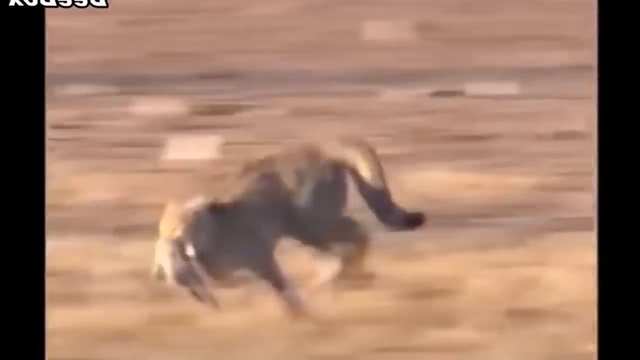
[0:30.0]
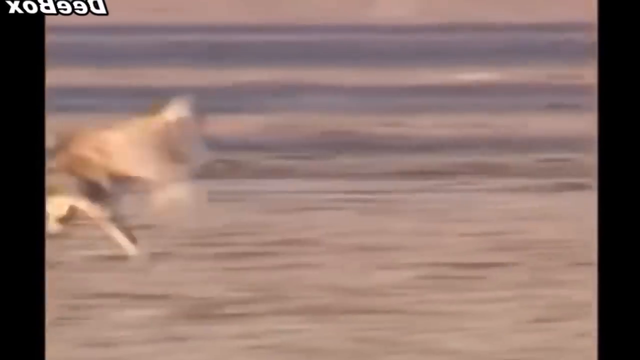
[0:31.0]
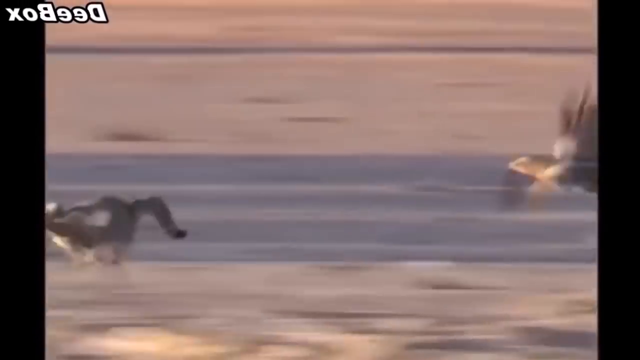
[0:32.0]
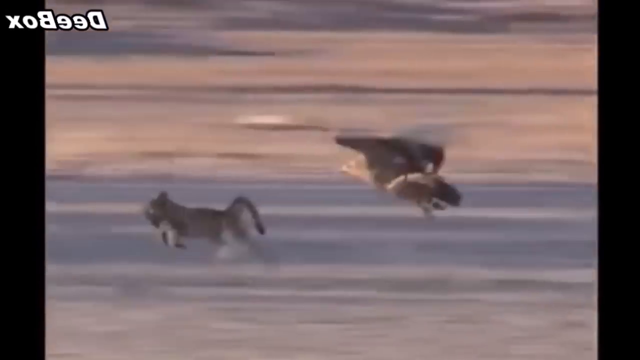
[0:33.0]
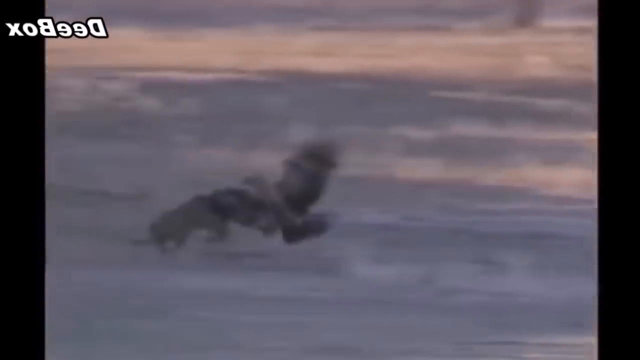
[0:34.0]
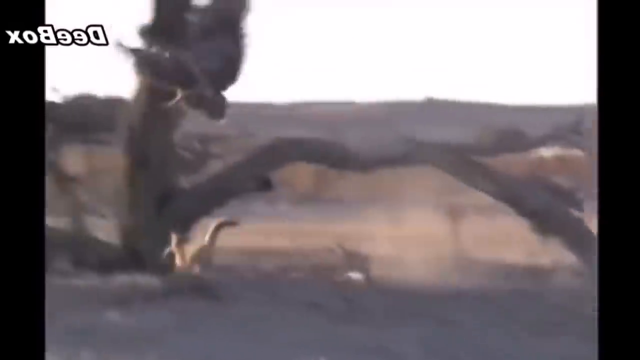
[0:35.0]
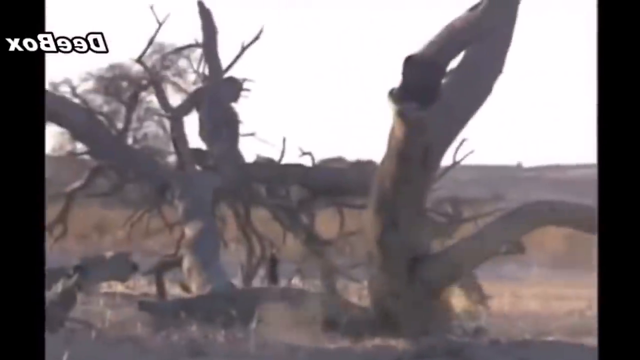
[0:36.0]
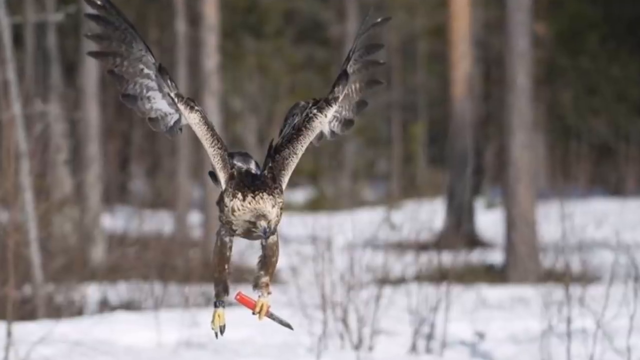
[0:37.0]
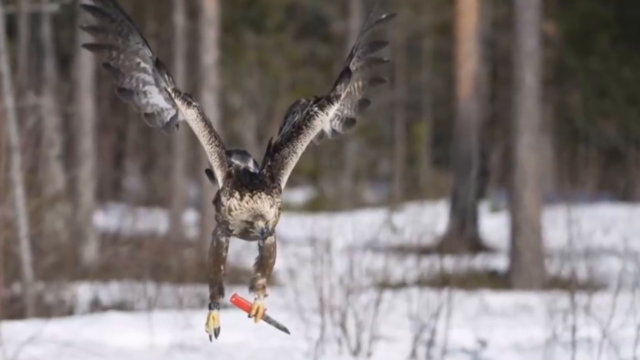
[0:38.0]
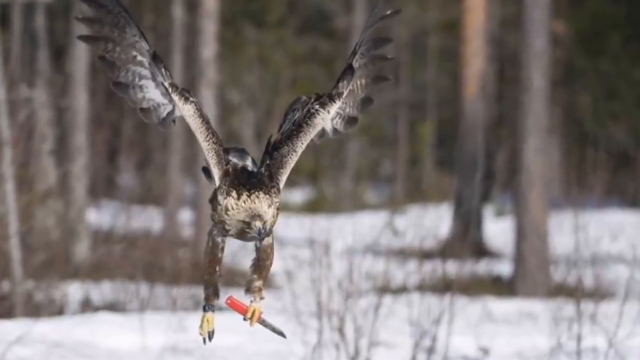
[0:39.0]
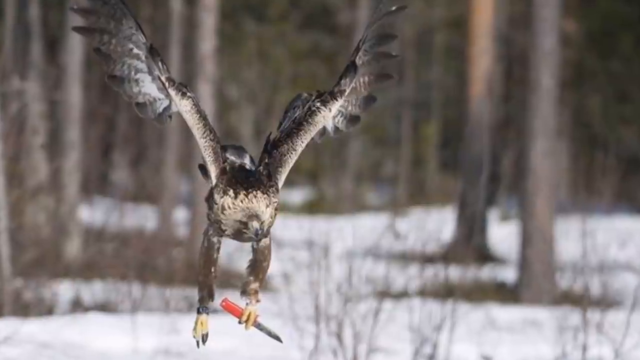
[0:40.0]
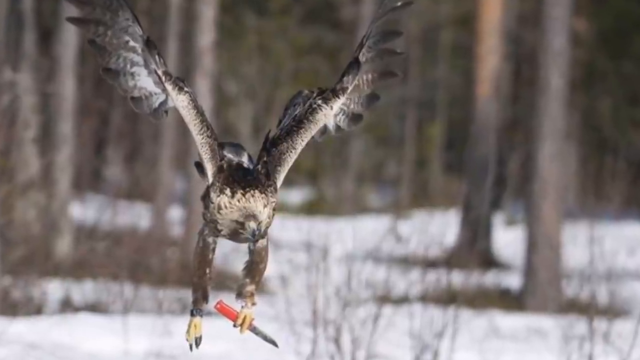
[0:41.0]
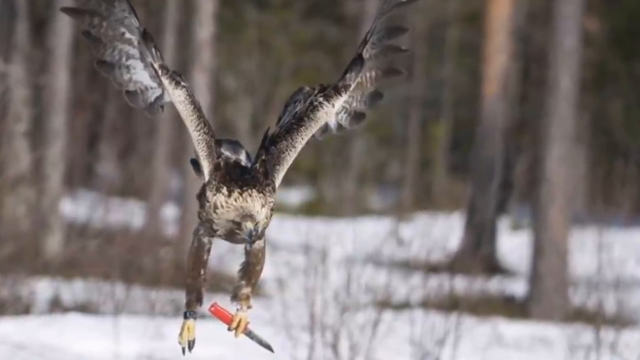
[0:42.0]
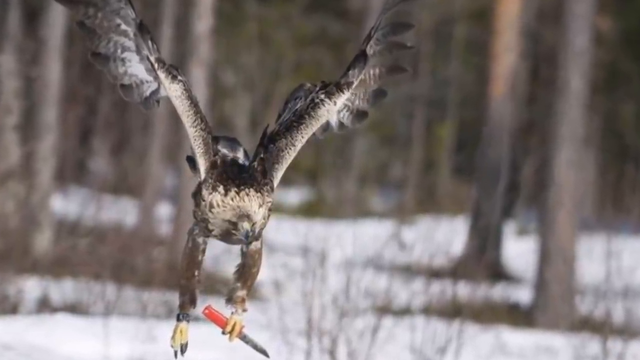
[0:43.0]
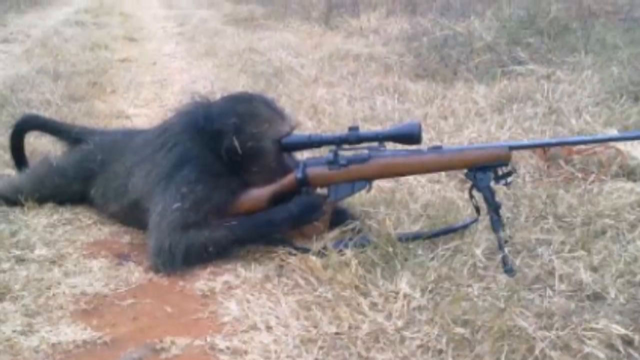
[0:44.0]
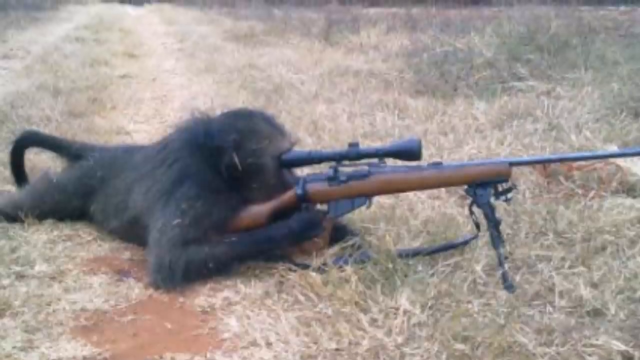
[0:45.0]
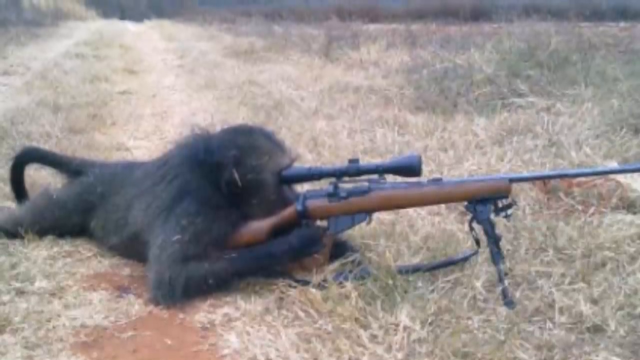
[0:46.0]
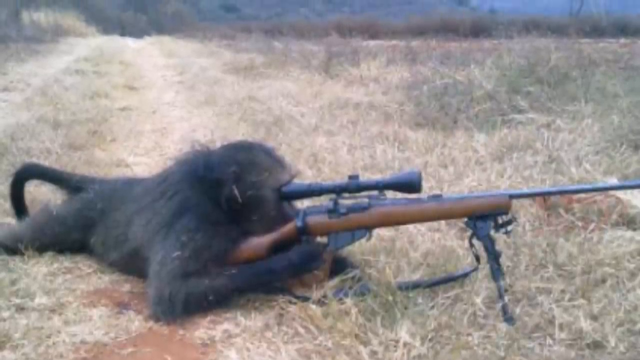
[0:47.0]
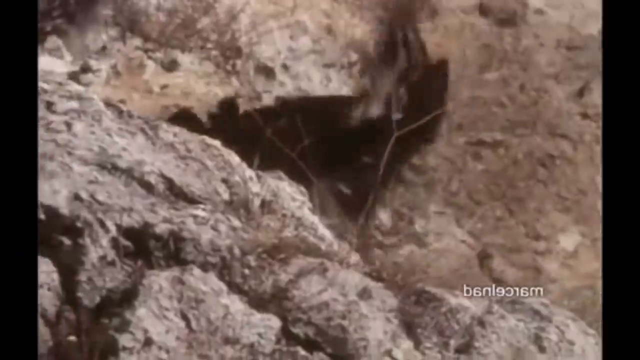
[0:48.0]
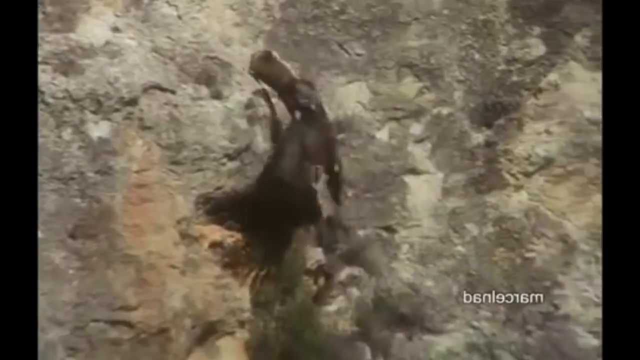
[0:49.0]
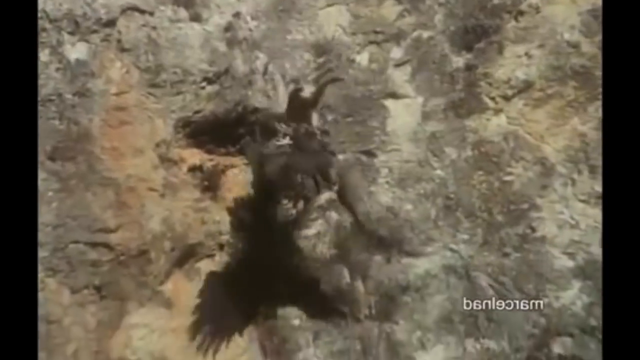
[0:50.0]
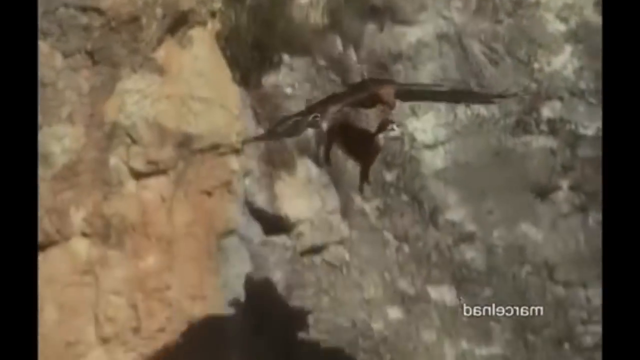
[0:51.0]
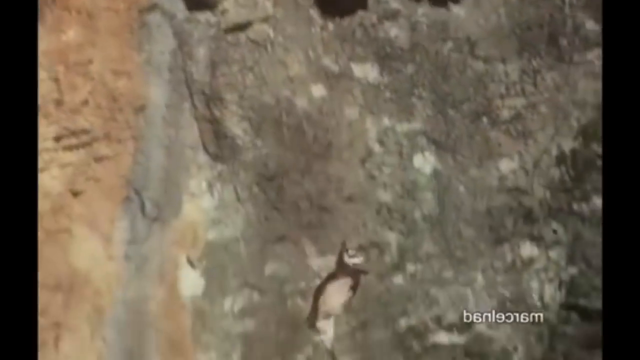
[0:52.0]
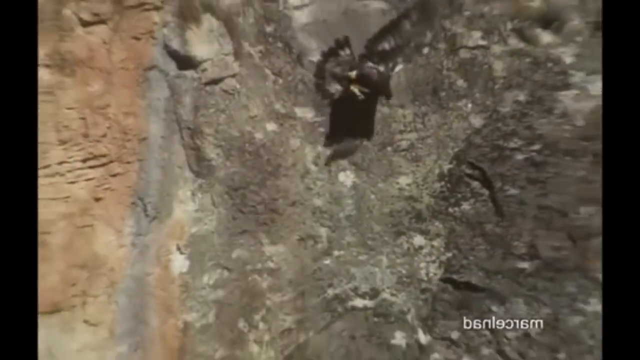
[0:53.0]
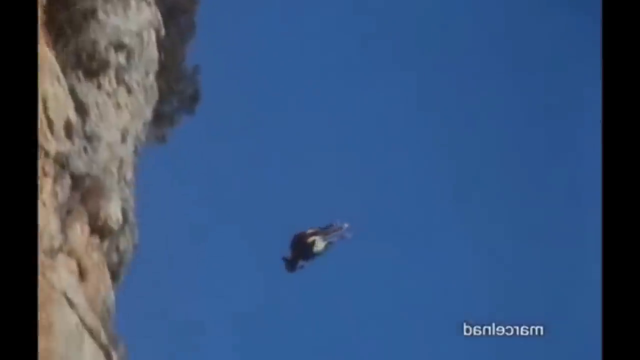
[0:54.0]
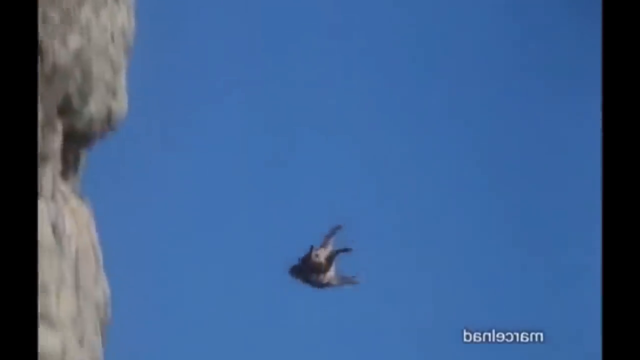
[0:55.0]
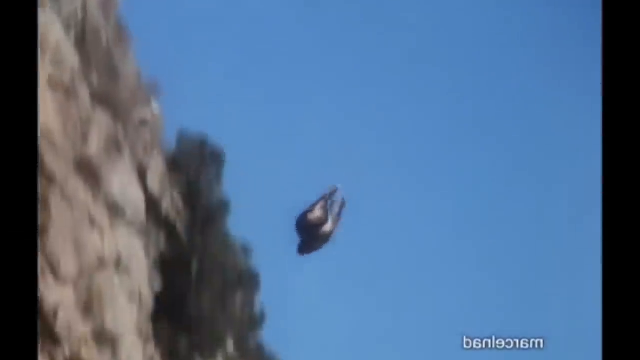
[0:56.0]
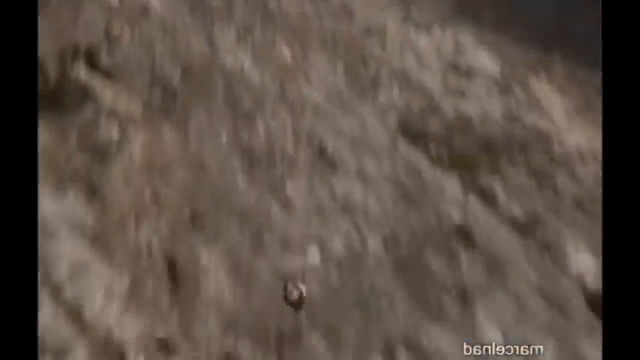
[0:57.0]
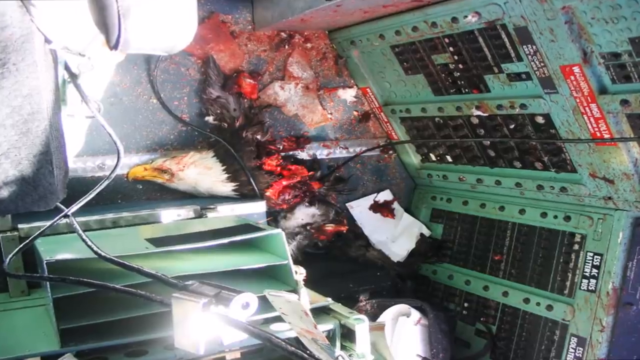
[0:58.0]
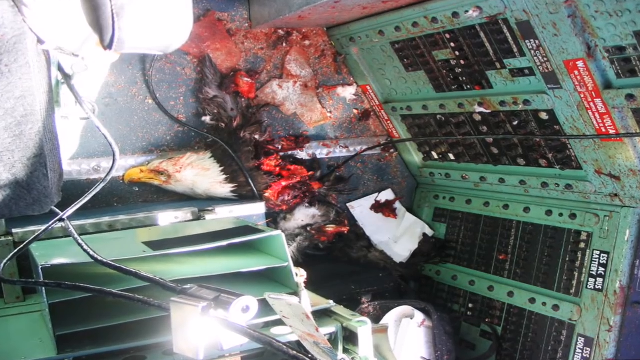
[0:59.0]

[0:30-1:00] A cheetah or similar big cat runs through a field with something in its mouth, apparently one of those small cats. It is chased by an eagle, which charges up against it and lifts its legs, and the cat apparently drops whatever was in its mouth. An eagle flies around holding what is apparently a screwdriver or a knife resembling a pocket or hunting knife in its claw. A baboon then appears with a rifle in front of it, its hand on the trigger, looking like it is about to shoot, like an army man. An eagle drops a goat off a mountainside; the little goats fall and hit the mountain. Finally, what looks like an injured eagle appears.